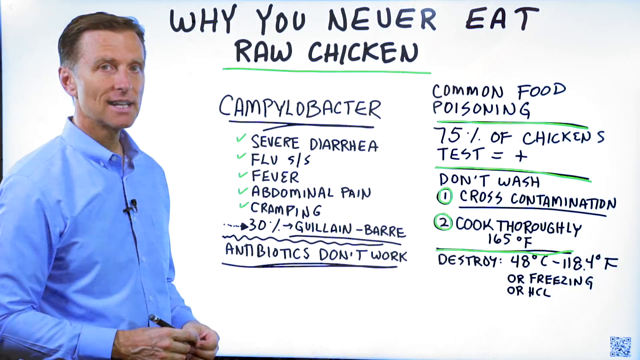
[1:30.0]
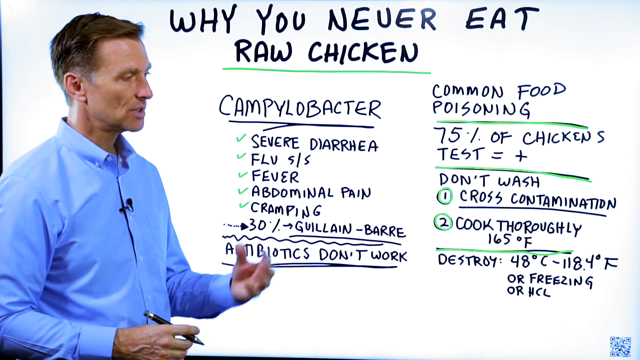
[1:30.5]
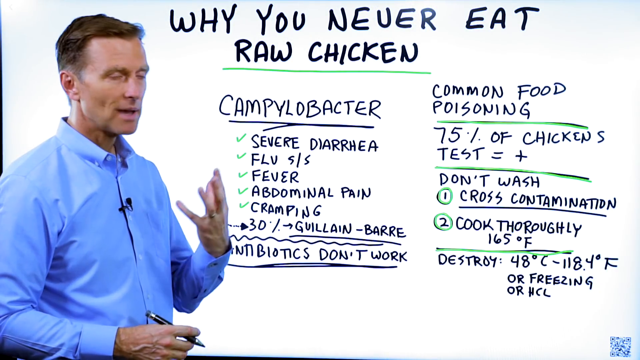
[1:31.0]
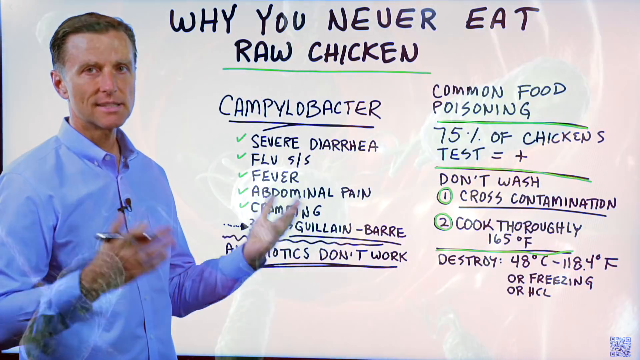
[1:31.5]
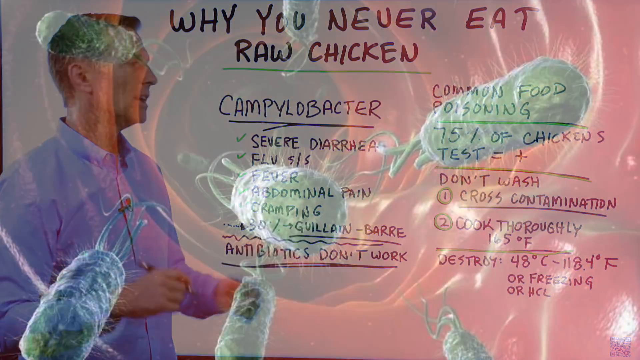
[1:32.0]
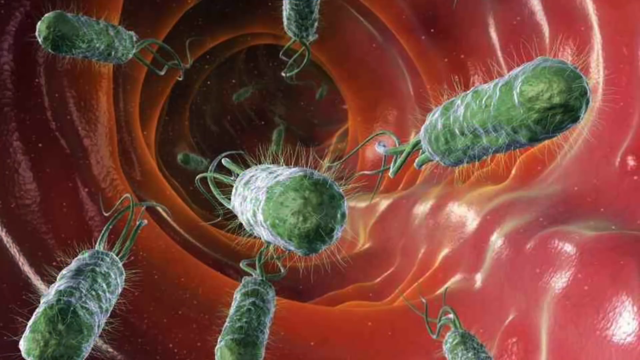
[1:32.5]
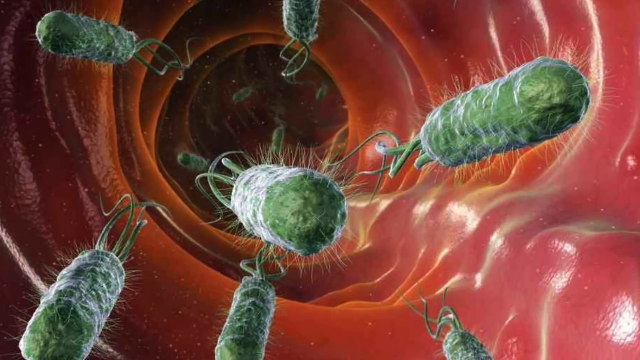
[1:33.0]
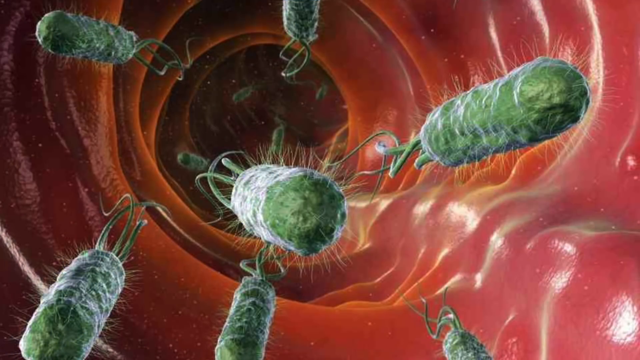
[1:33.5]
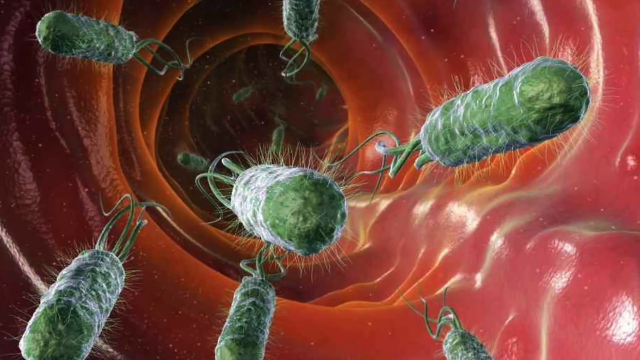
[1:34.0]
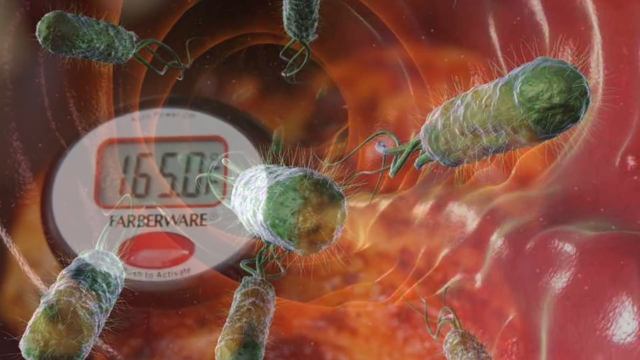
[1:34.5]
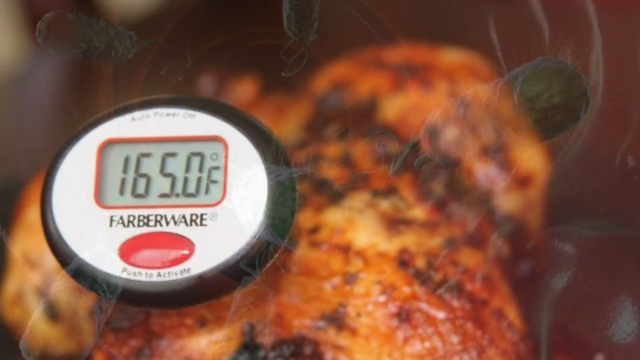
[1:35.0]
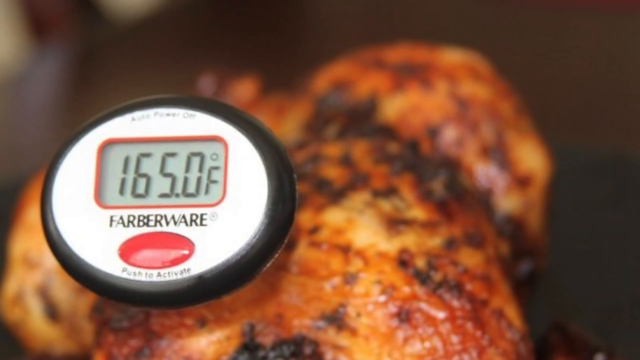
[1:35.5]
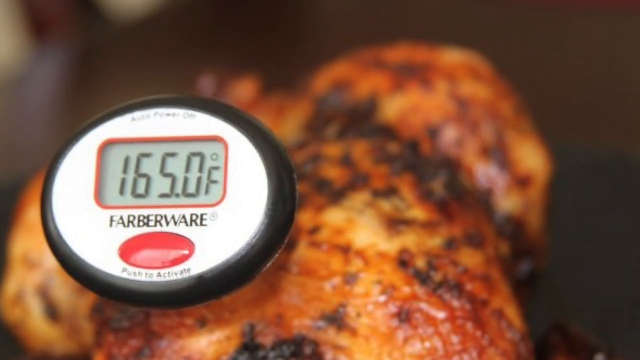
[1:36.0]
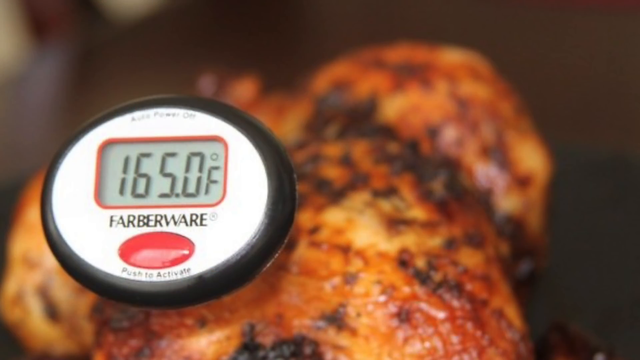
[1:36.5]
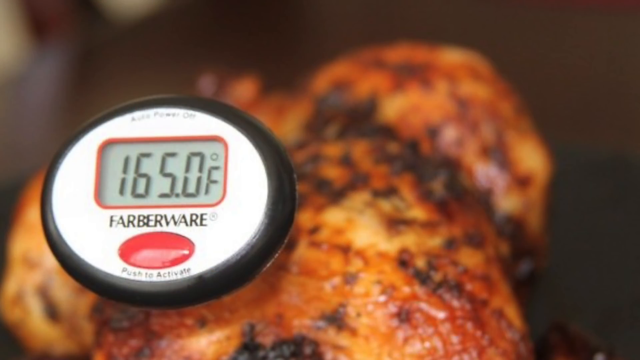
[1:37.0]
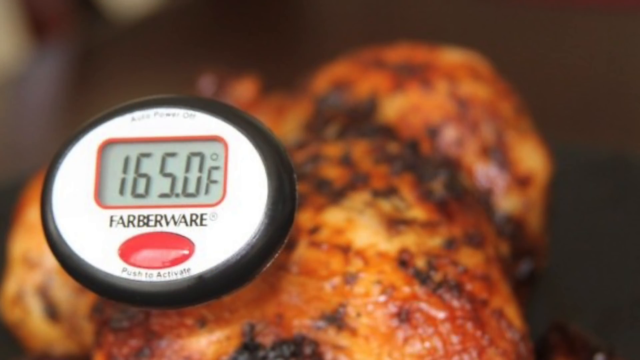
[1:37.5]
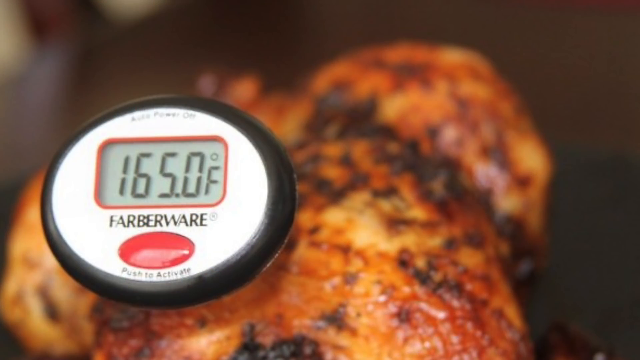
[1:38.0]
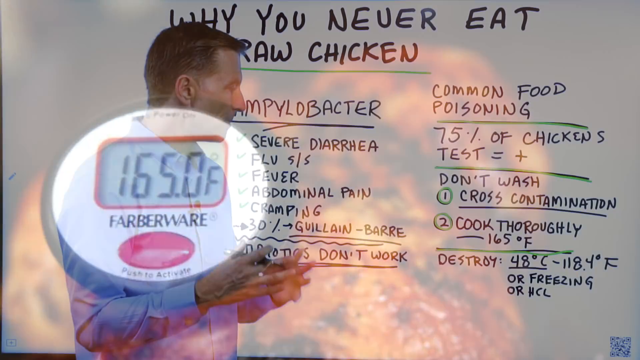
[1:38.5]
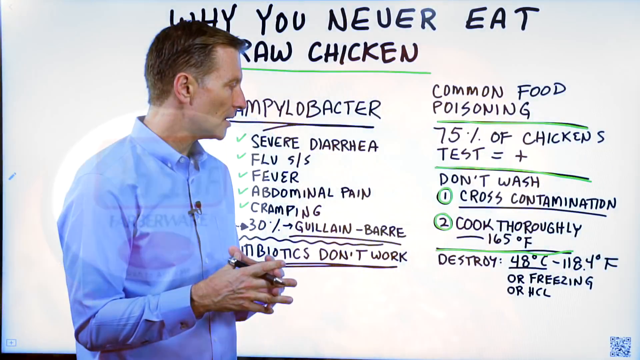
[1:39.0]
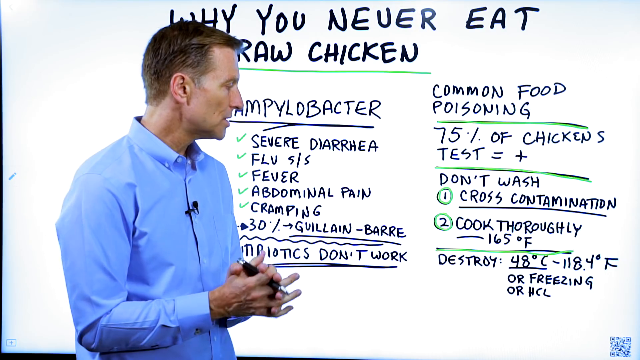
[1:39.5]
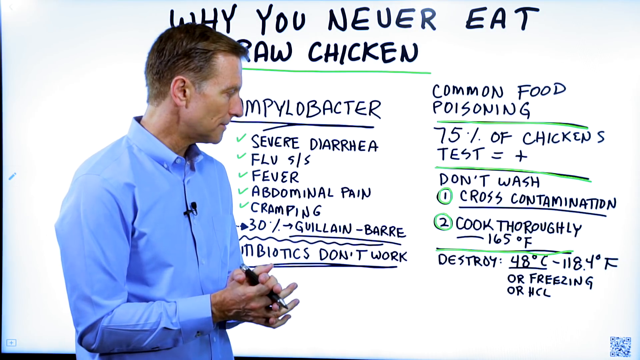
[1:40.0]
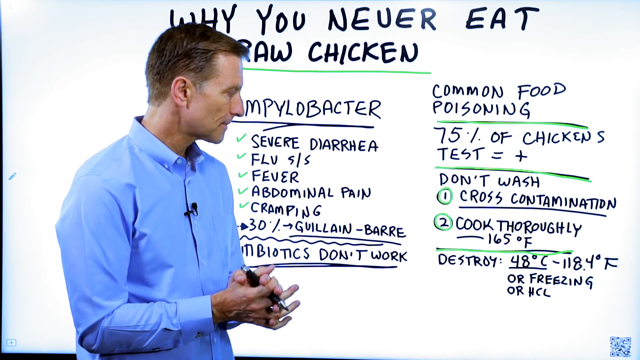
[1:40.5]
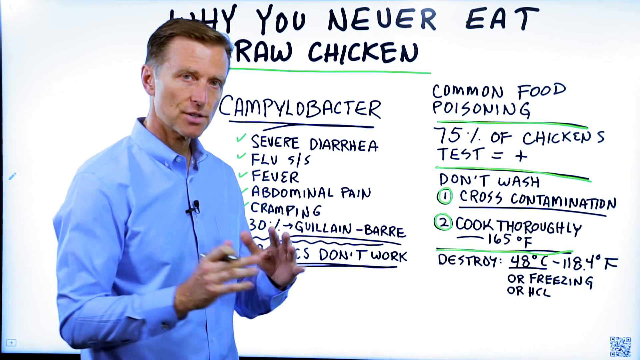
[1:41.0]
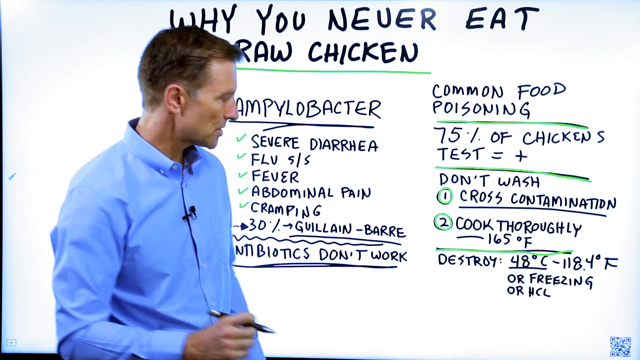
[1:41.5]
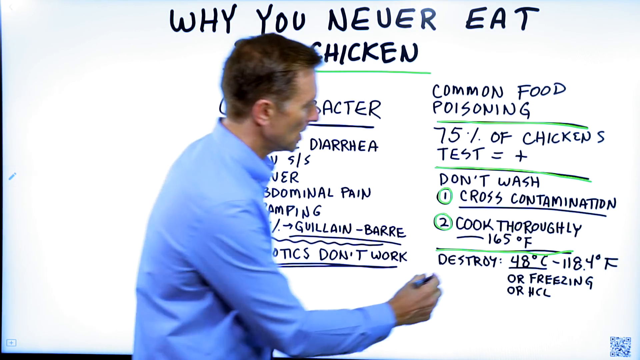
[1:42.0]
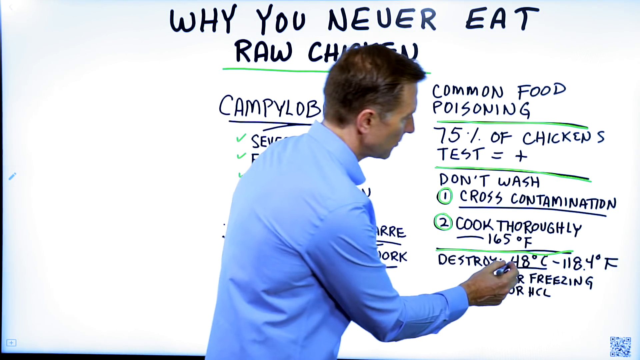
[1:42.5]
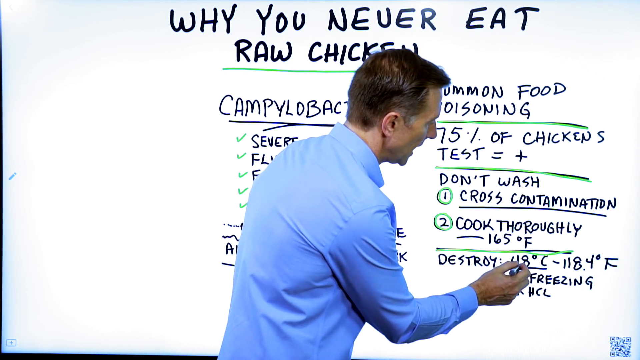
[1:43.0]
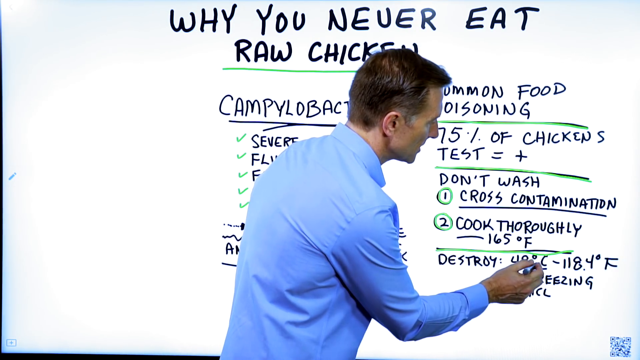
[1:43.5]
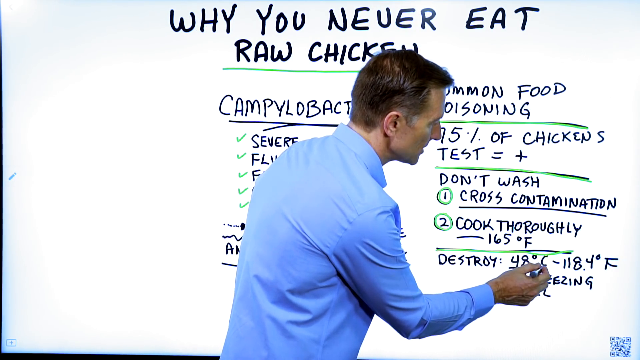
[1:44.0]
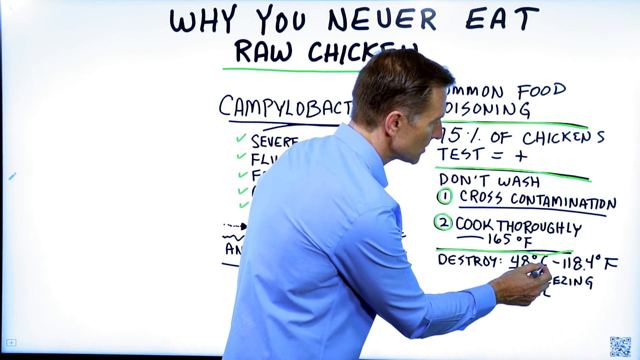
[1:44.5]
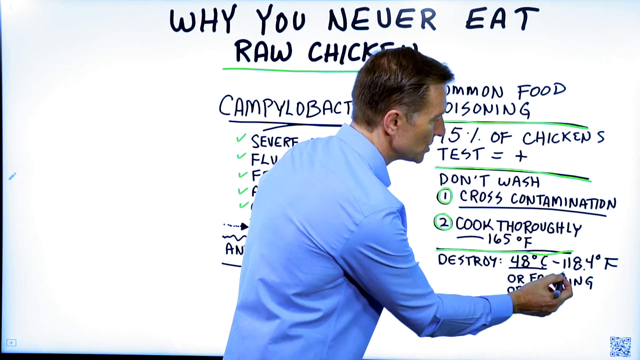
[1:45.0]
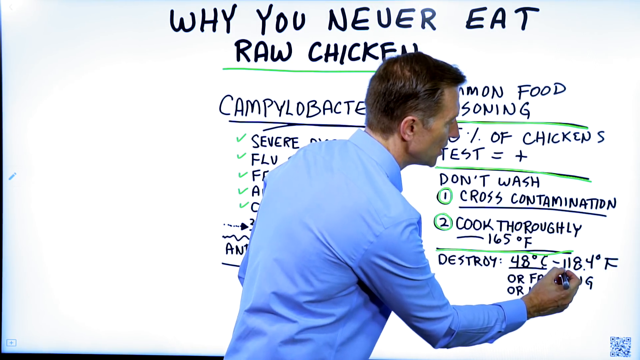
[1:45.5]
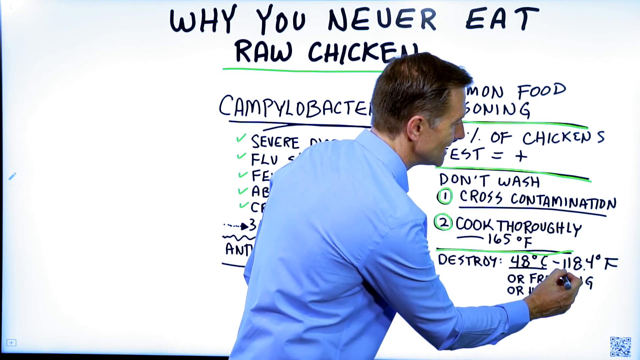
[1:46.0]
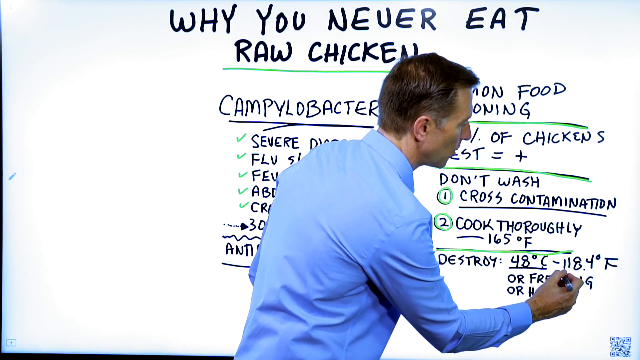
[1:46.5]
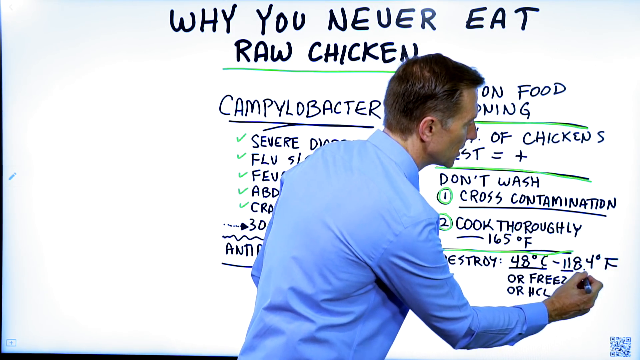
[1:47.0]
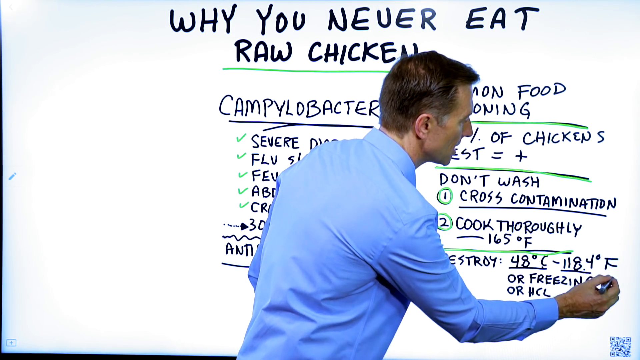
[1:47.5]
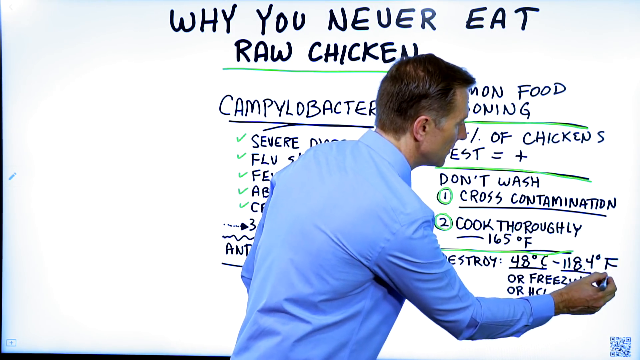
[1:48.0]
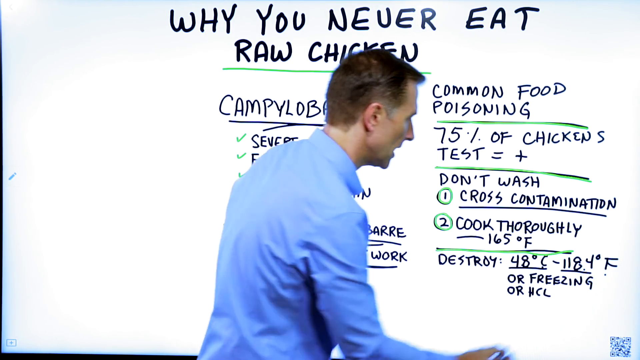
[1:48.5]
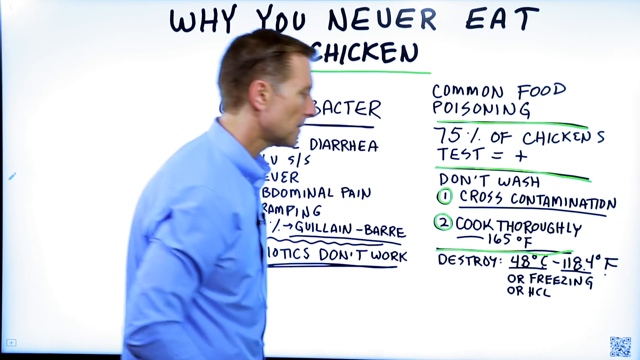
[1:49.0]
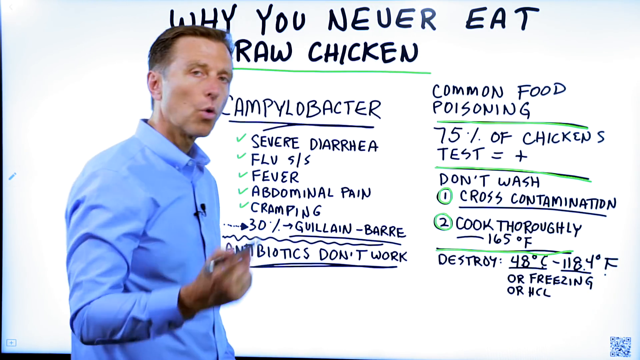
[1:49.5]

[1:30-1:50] A picture of the inside of a stomach appears, with green bacteria in it; the stomach looks red. Next, meat is shown in the oven. A device that tests the heat is shown; it is black and white with a round red part and reads "165.0°F". The teacher is shown again at the whiteboard, holding a black marker, and underlines "destroyed 48 degrees Celsius" and "negative 118.4 degrees F".